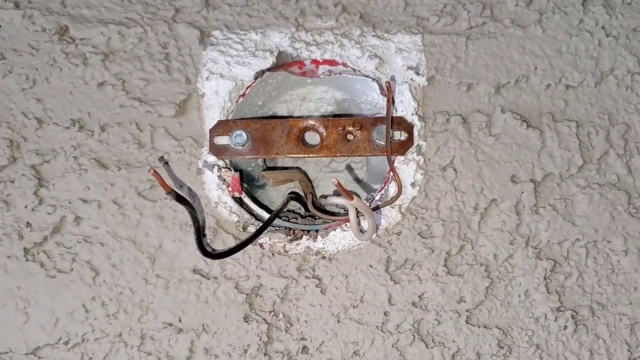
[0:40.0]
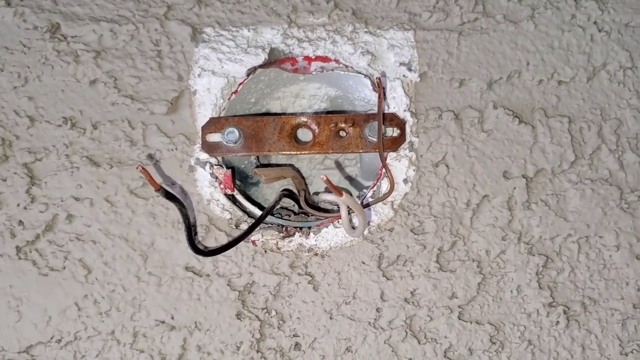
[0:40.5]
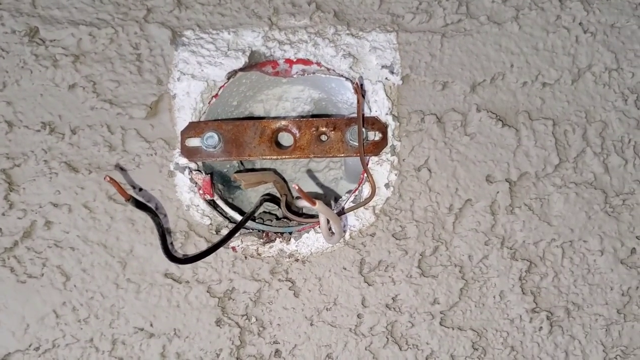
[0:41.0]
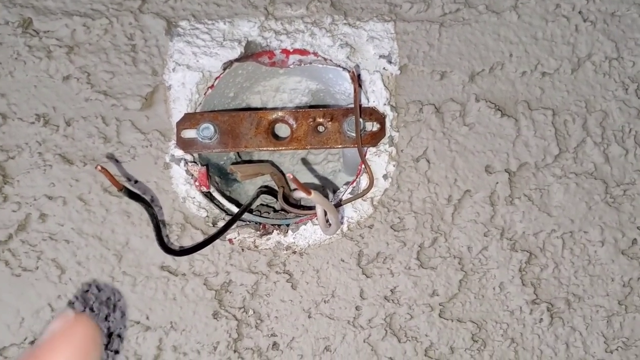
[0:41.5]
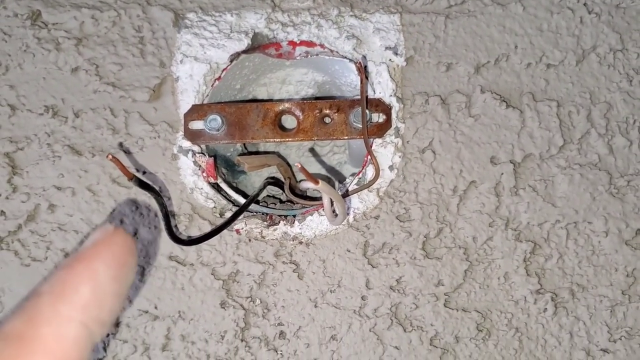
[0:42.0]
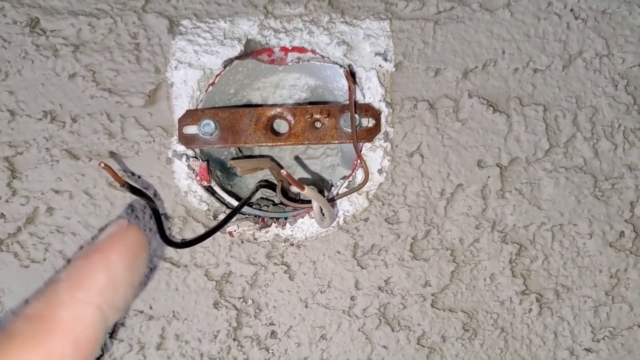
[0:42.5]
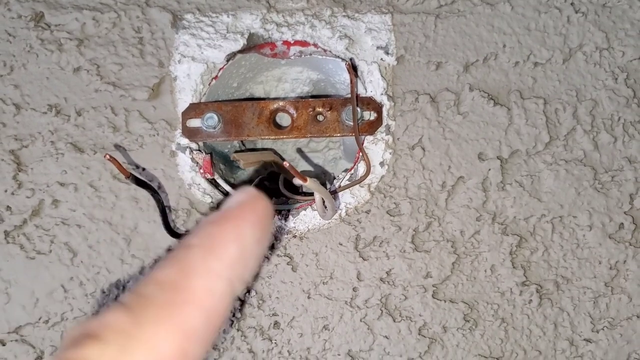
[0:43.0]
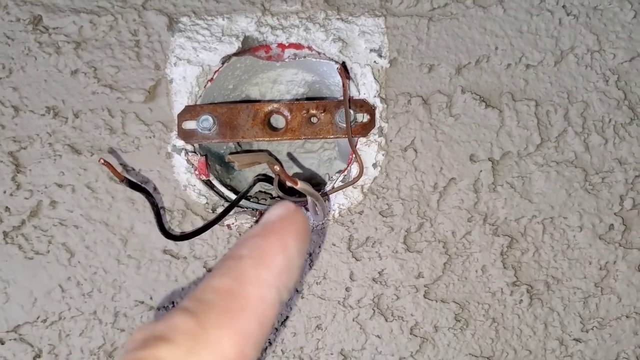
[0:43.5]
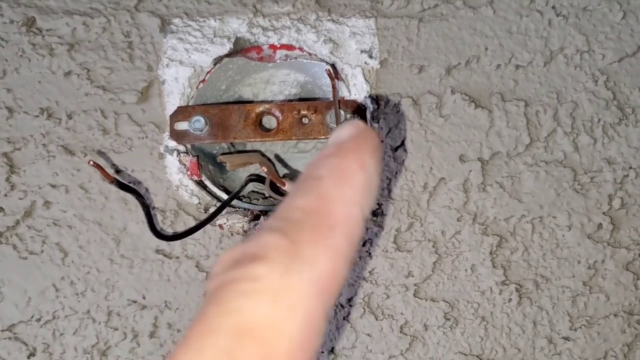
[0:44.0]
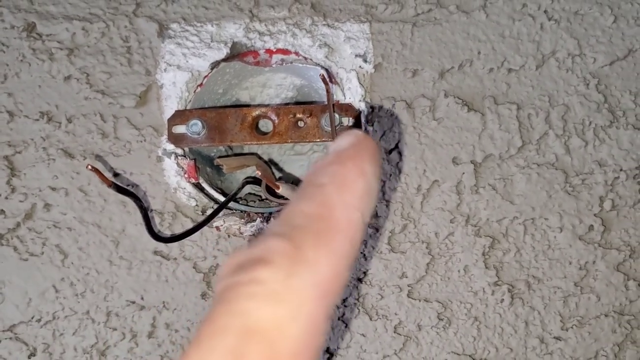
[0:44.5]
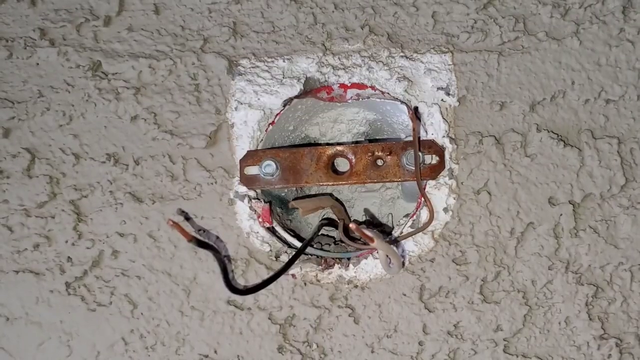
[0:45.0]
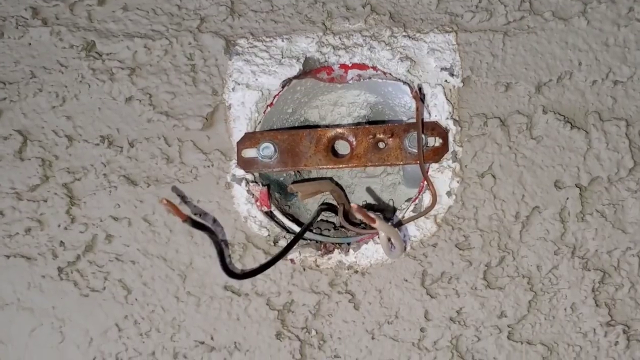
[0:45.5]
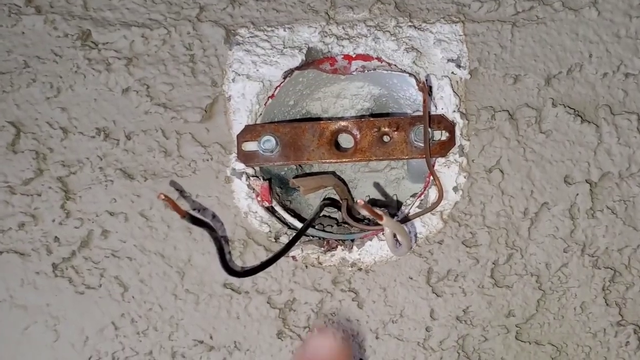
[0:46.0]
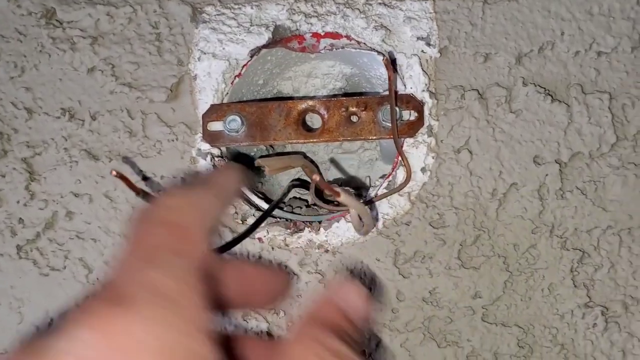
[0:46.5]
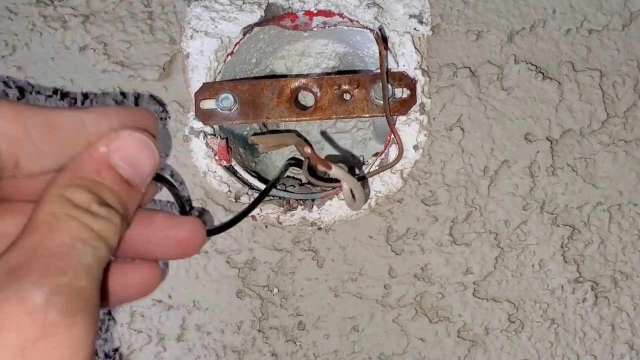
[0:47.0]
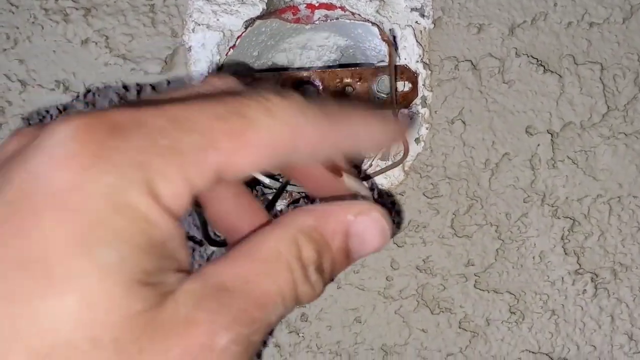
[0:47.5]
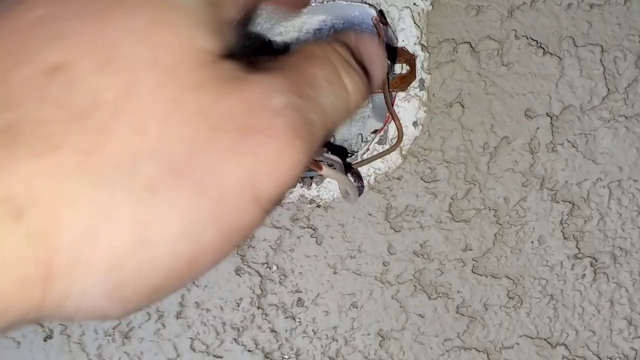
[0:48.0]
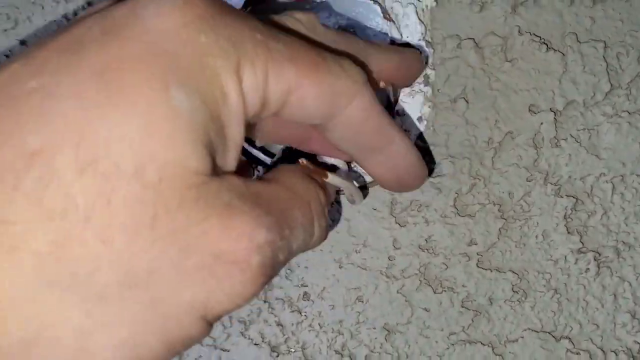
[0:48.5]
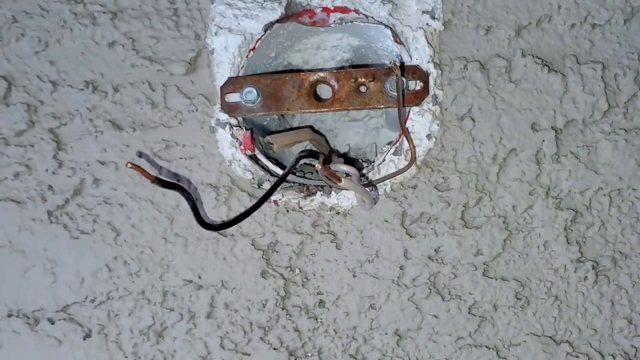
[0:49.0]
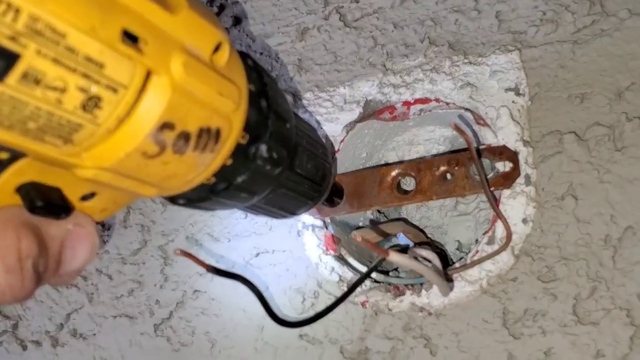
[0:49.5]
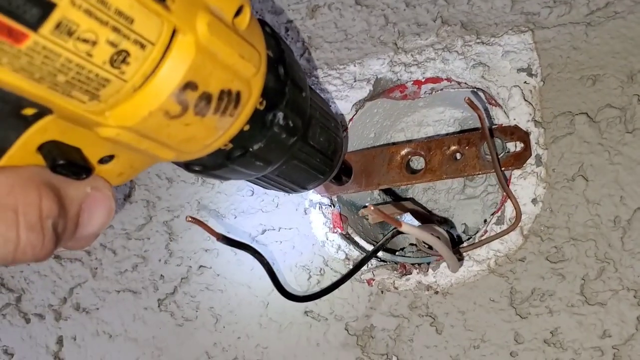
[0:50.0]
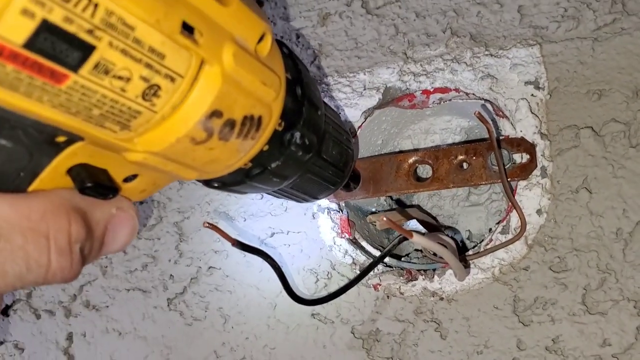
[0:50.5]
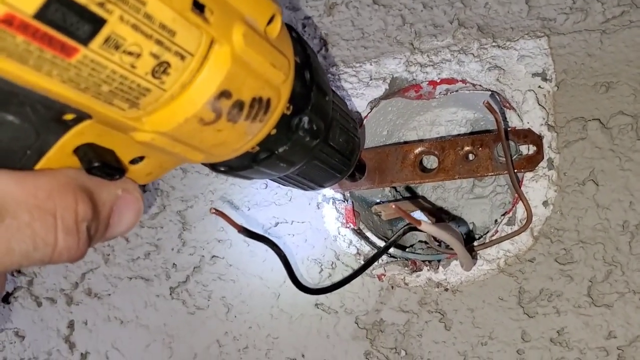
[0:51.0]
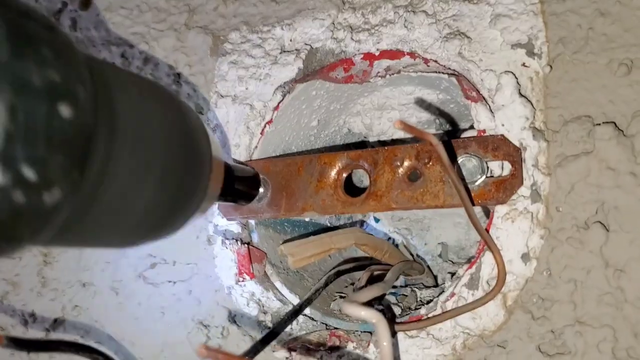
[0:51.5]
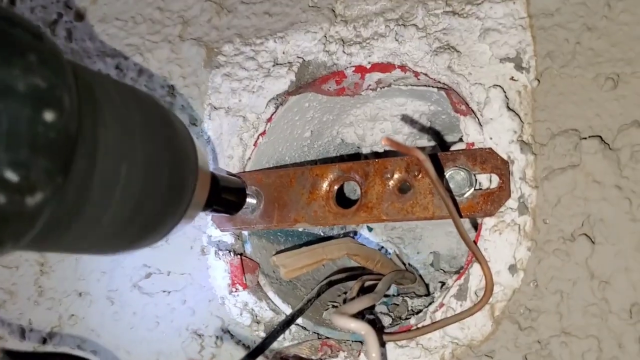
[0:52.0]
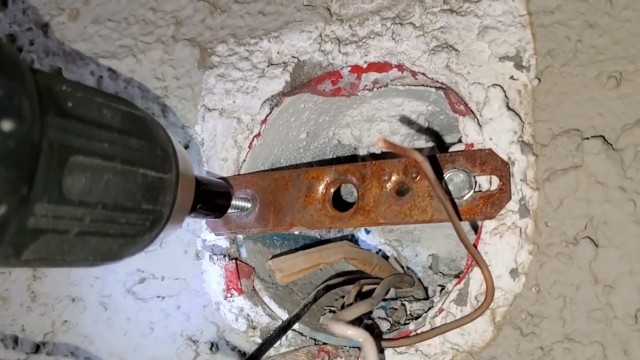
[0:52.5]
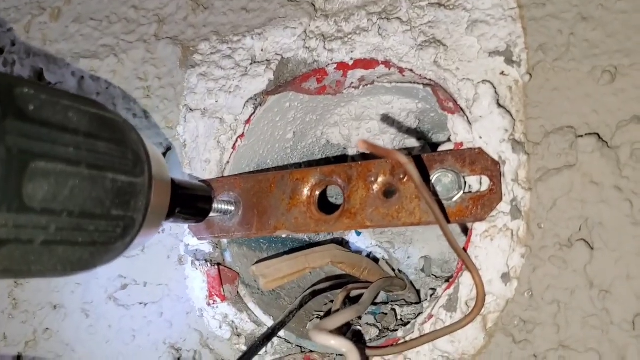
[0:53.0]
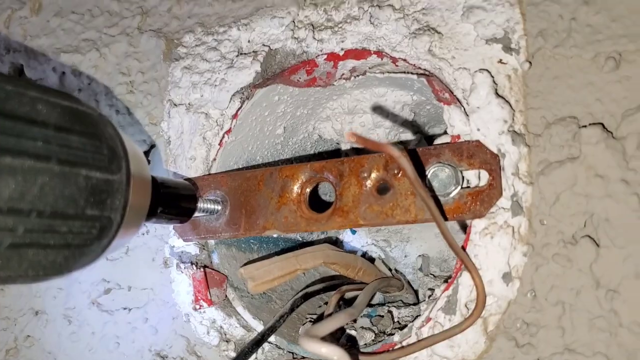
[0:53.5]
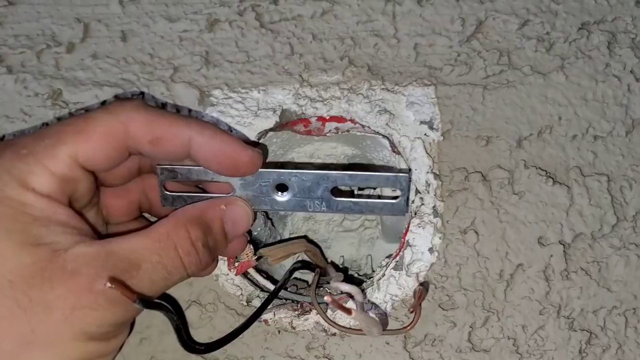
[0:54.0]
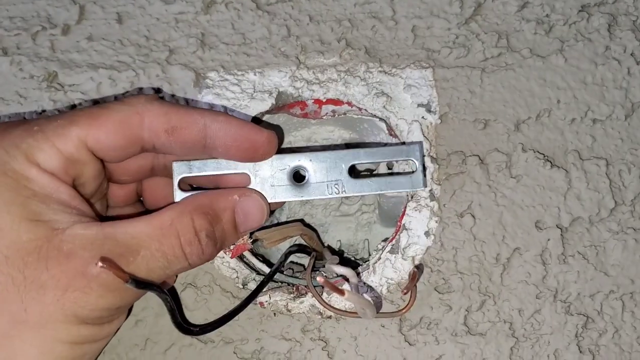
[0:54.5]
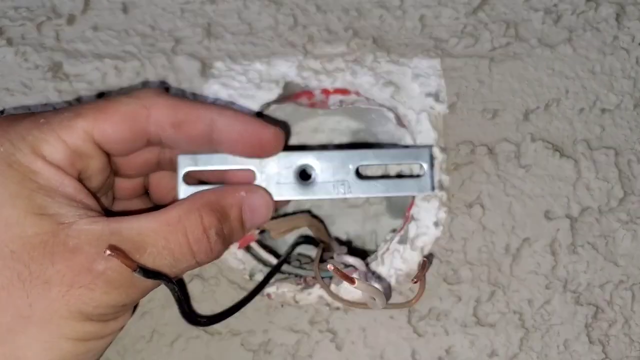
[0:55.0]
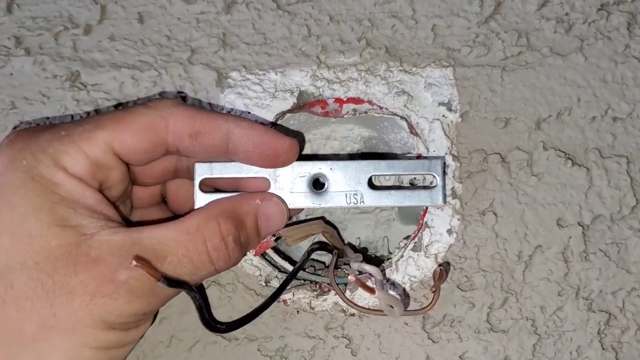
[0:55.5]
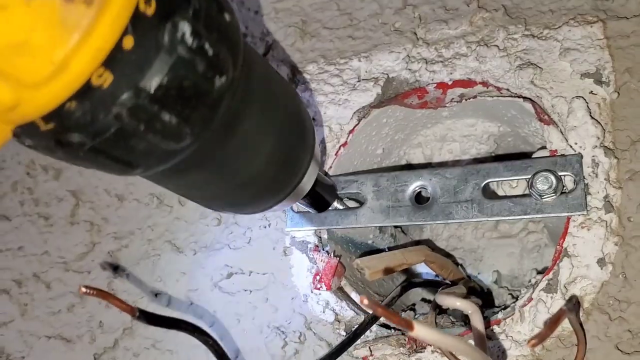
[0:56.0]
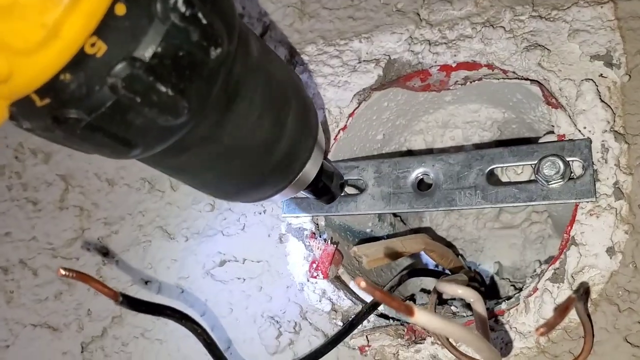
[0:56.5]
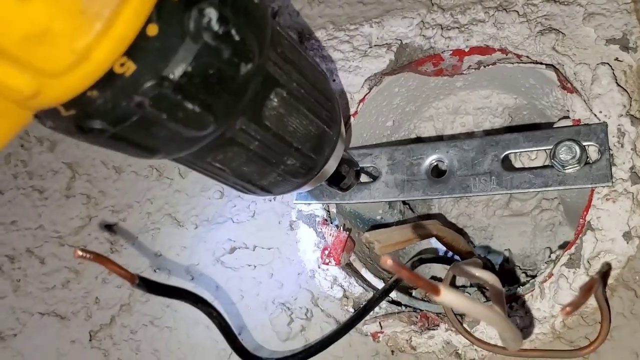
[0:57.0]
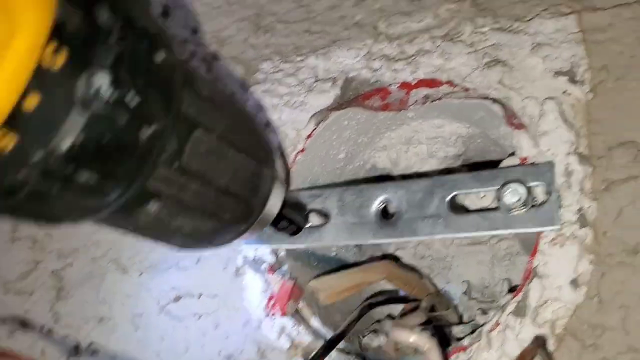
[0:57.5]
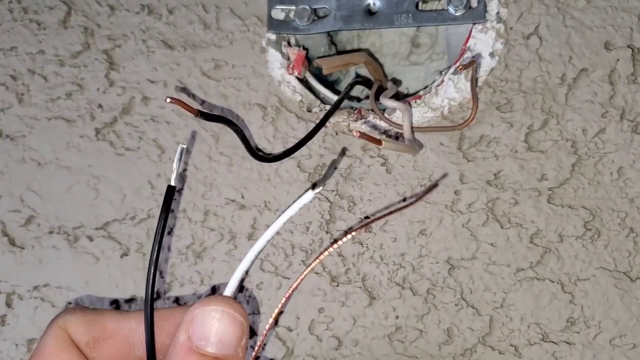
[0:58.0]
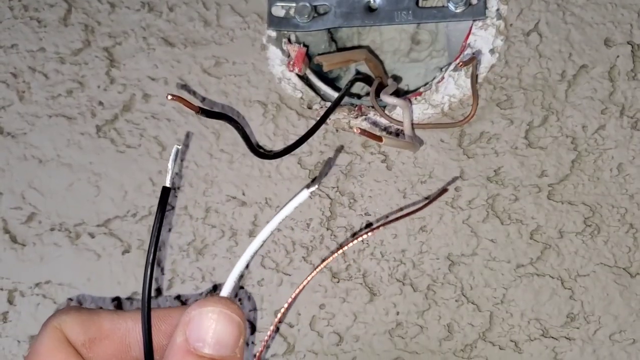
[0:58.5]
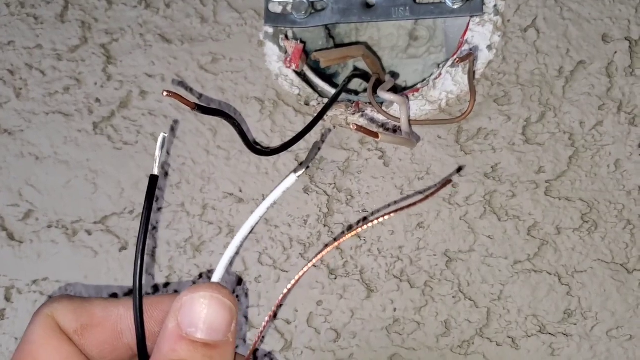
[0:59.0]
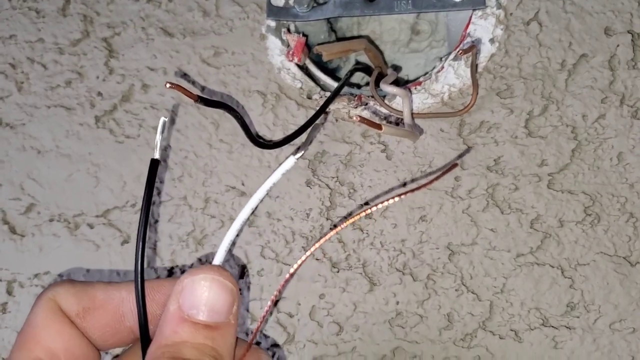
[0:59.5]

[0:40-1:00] The man shows the cables: the neutral cable, the positive cable and the earth cable. He screws out the old metal bridge, and there is a new one. A cable is visible, and he is probably changing the cables as well. There is a warm green color, and a wire comes out from something fixed into the wall, with the cables coming through it; this is apparently an electric insulator.